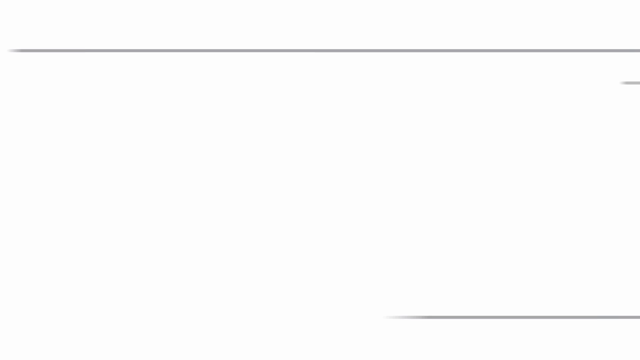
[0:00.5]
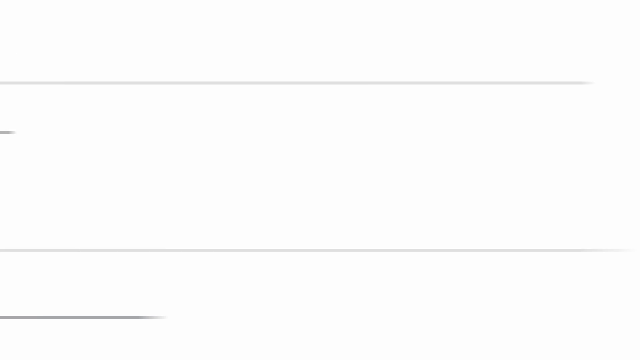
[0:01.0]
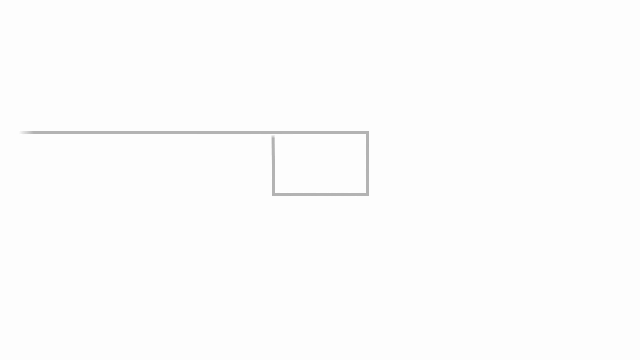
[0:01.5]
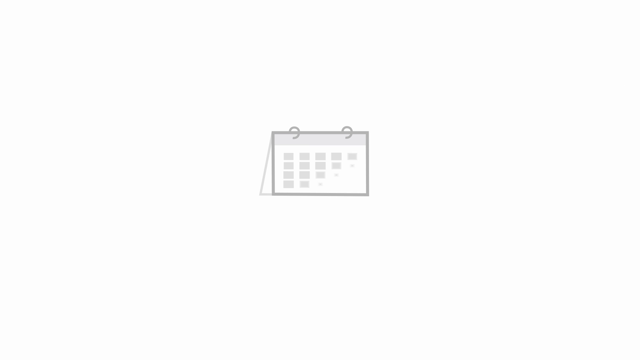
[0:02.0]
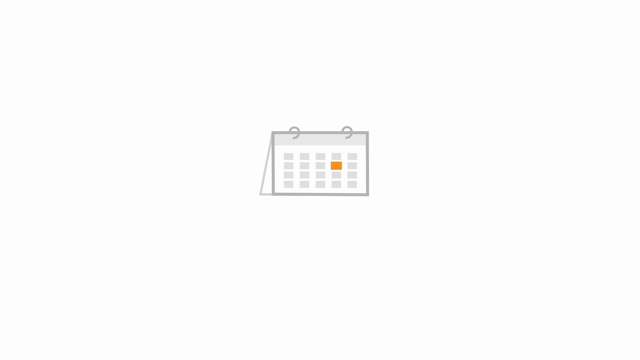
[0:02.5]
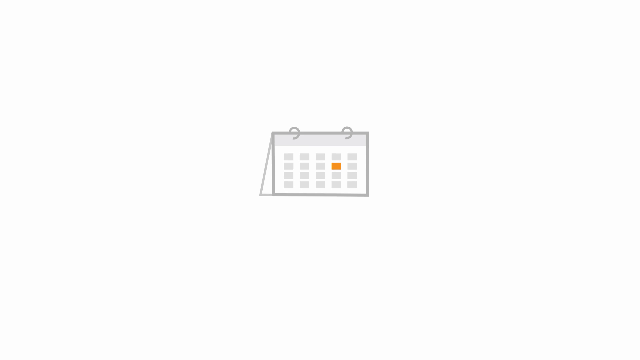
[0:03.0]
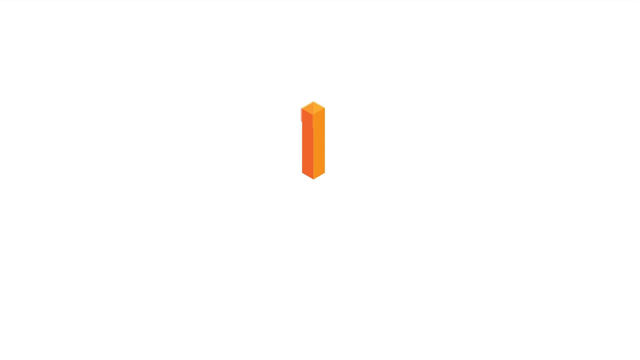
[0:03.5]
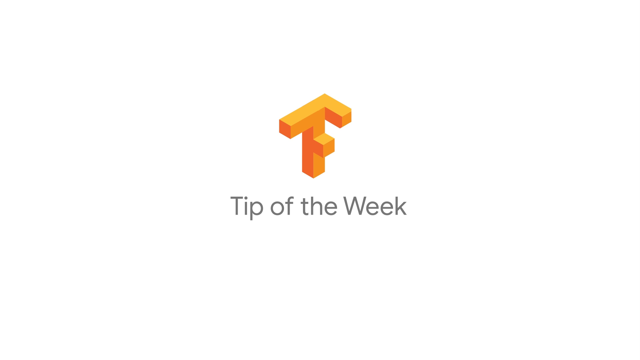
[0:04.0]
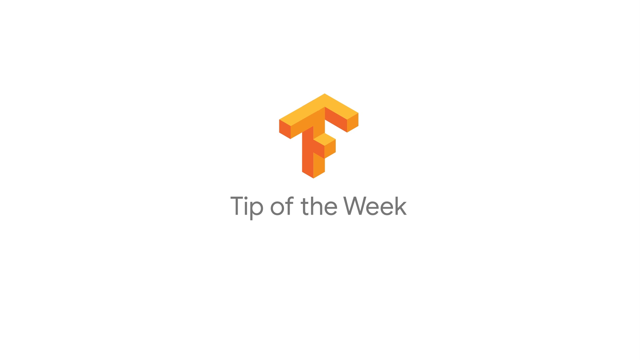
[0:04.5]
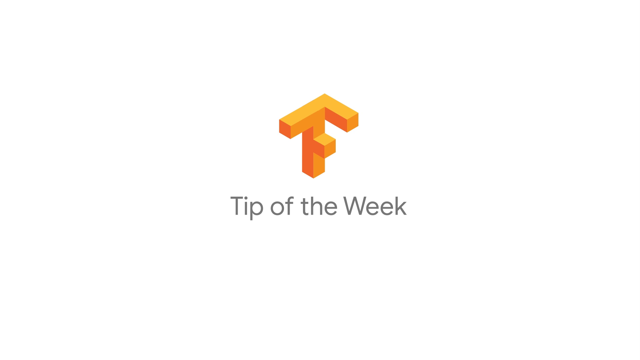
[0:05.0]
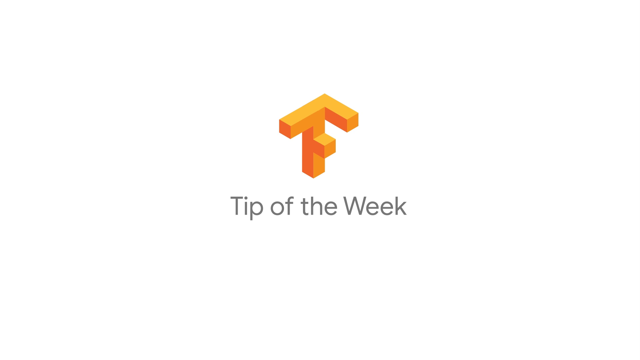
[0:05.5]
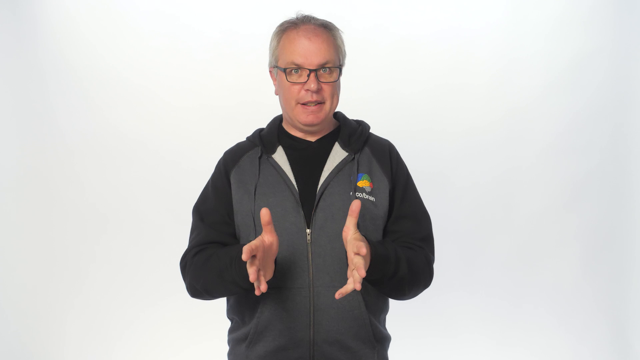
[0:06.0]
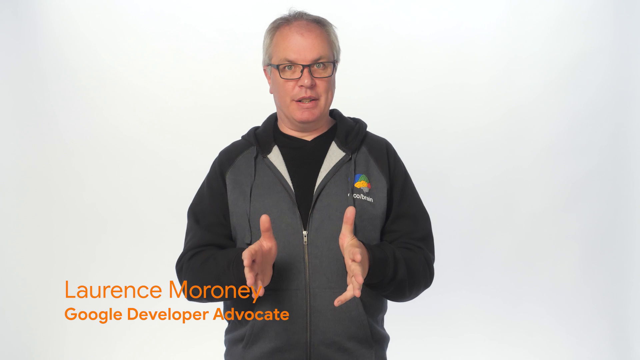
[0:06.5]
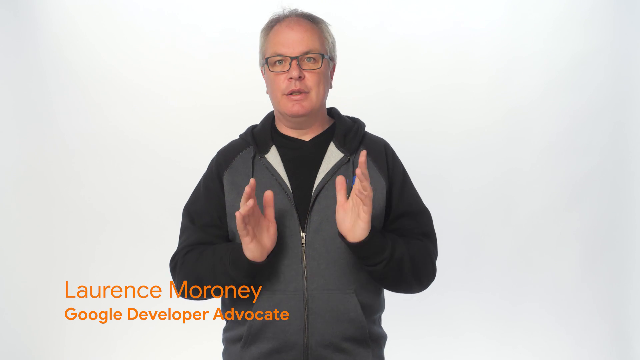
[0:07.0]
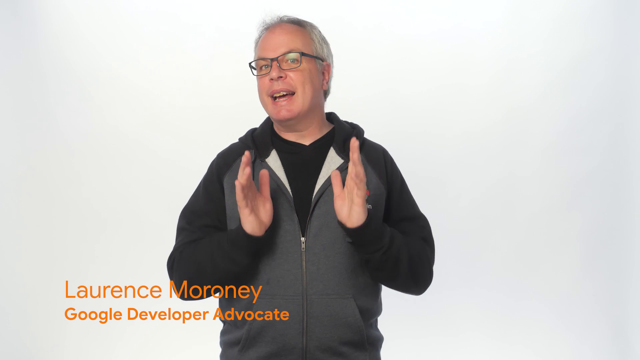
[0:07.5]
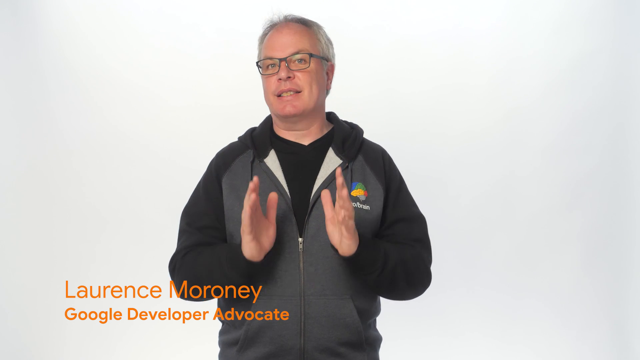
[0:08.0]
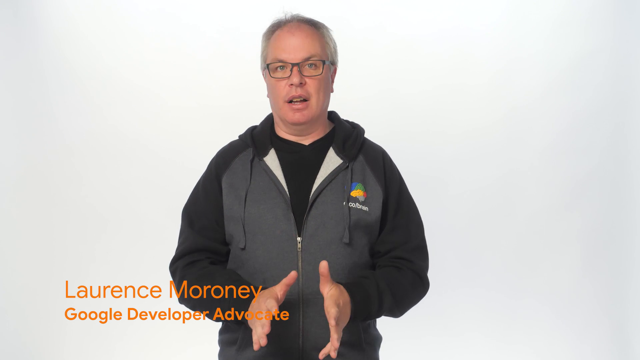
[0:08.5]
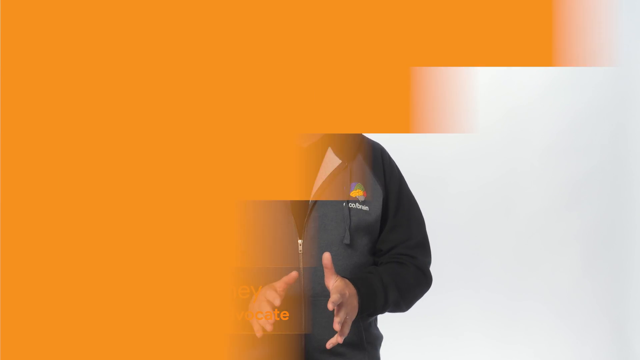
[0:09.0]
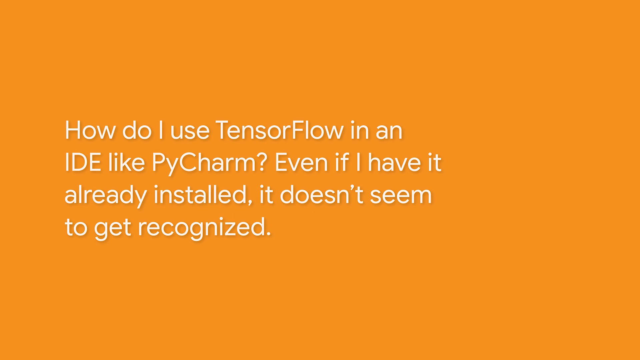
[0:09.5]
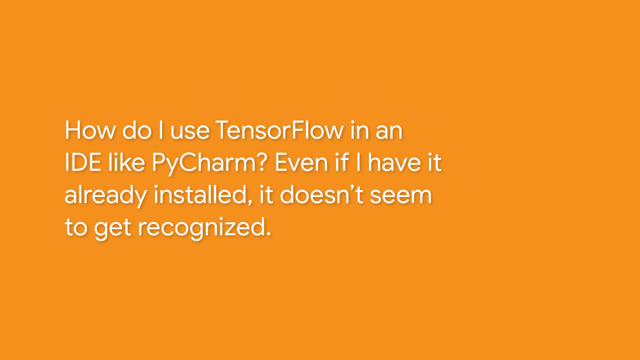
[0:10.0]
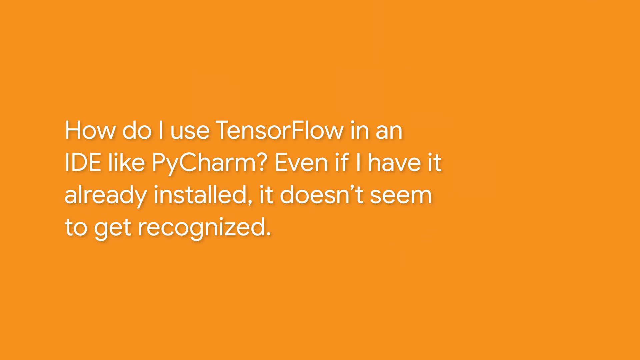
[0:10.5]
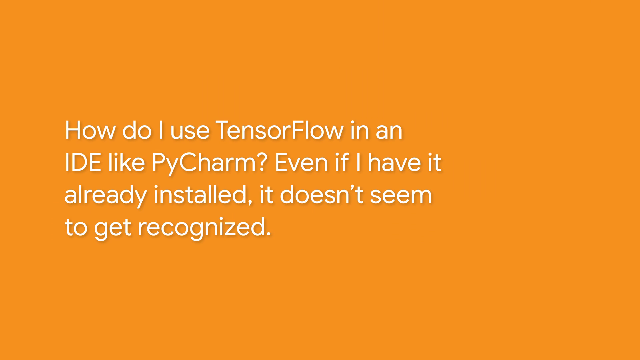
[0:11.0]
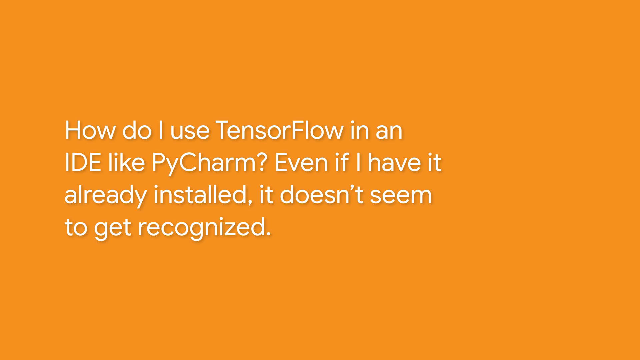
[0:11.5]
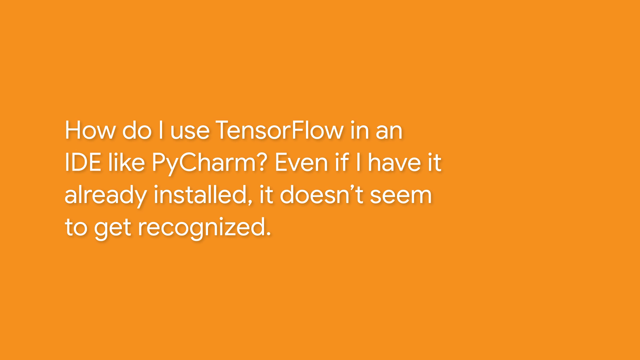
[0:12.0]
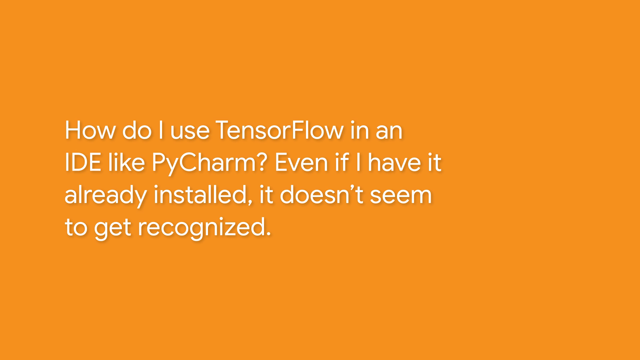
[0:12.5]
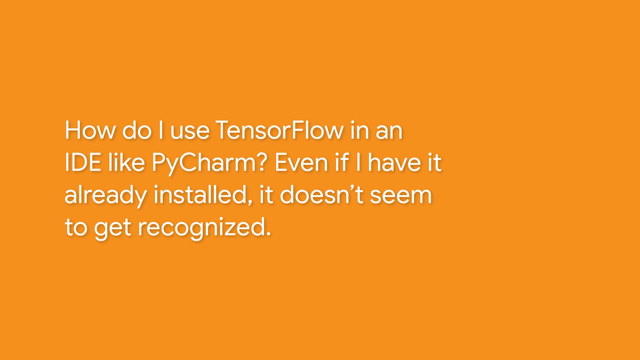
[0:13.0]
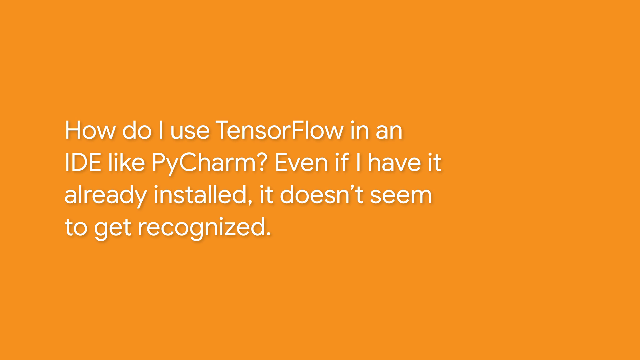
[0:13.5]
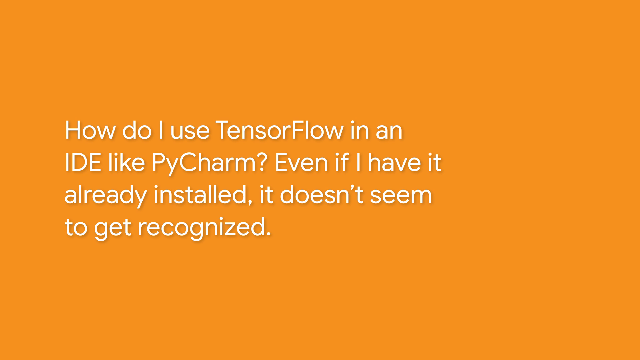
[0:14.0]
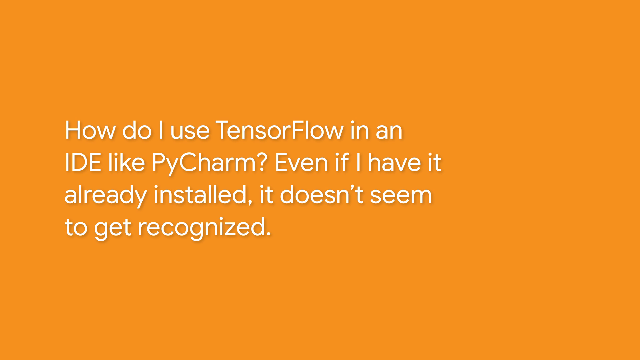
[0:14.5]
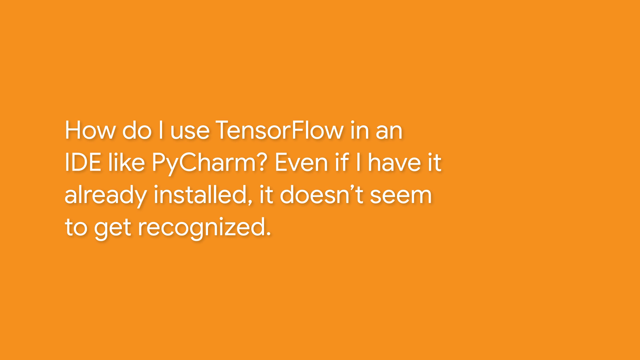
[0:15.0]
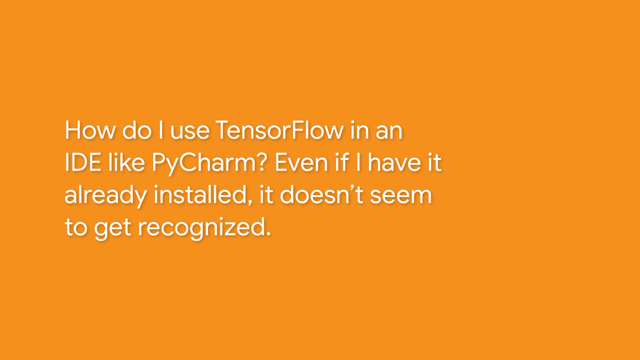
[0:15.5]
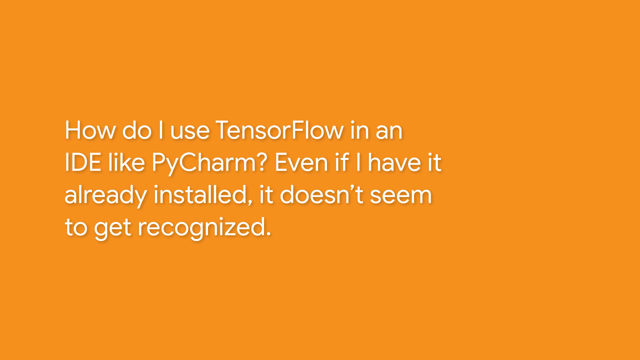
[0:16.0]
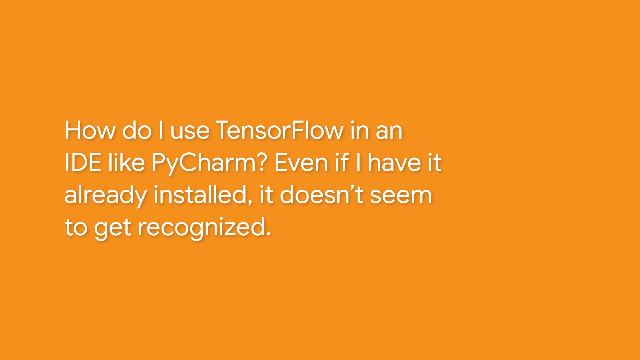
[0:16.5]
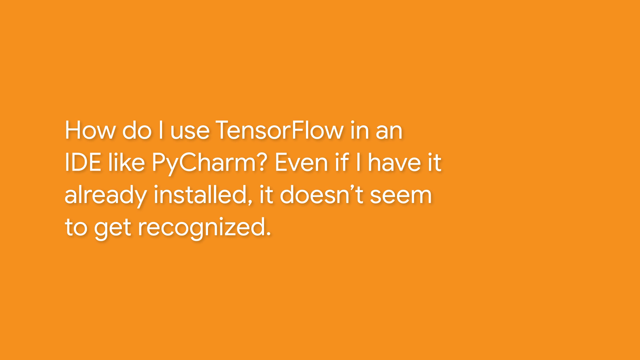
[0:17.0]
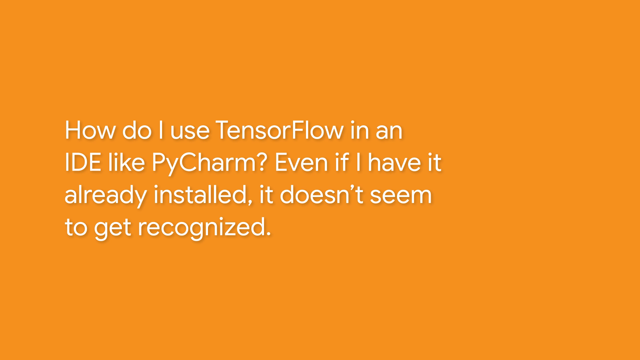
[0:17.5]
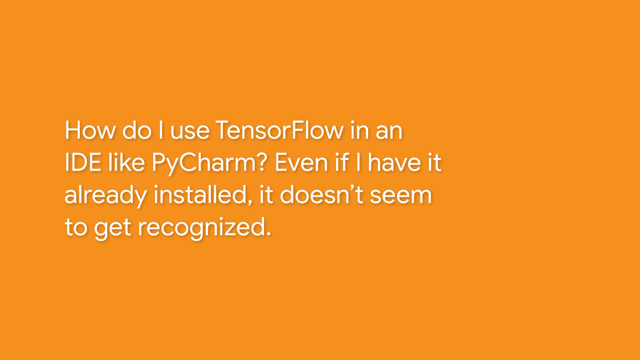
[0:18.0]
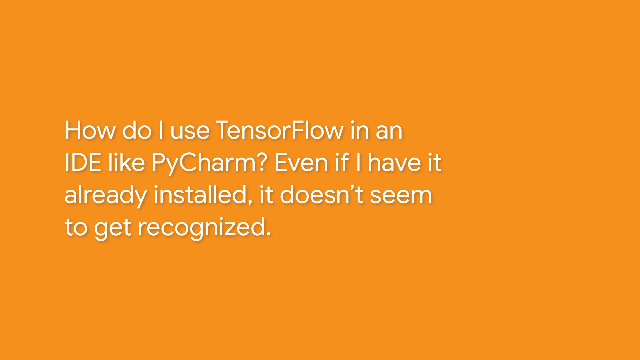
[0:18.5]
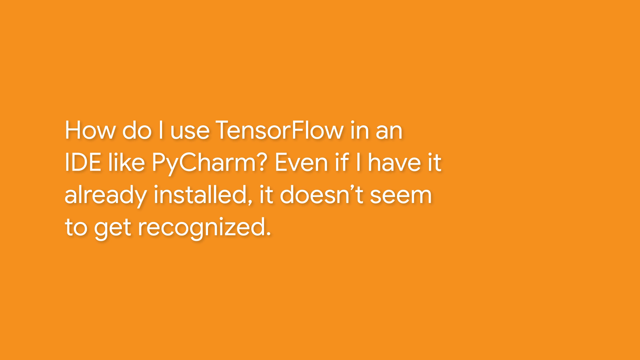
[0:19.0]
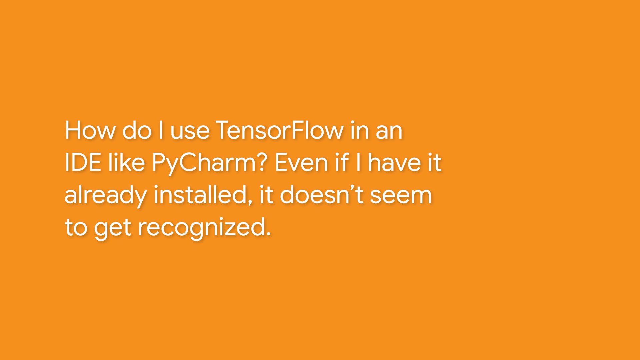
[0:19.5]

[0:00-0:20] The video opens on a white backdrop. A white and gray calendar pops up in the middle of the screen; of its 20 little gray rectangles, one is orange. An orange emblem then appears, looking like a vertical T or F combination, with "tip of the week" in black right underneath it. A man named Lawrence Maroney, identified as a developer associate, appears. He is probably about 55 years old, with gray hair and glasses, and wears a gray sweatshirt with black sleeves over a black shirt. He talks with his hands, pushing them up and back for emphasis. An orange background screen then comes up with white text reading "how do I use TensorFlow in an IDE like PyCharm, even if I have it already installed, it doesn't seem to get recognized."